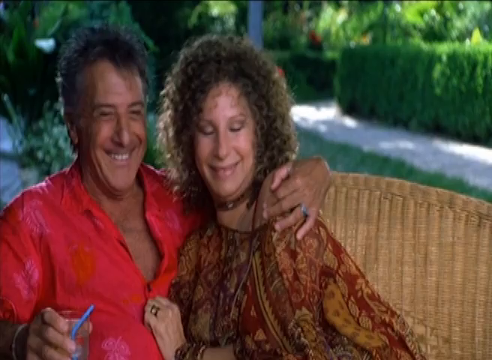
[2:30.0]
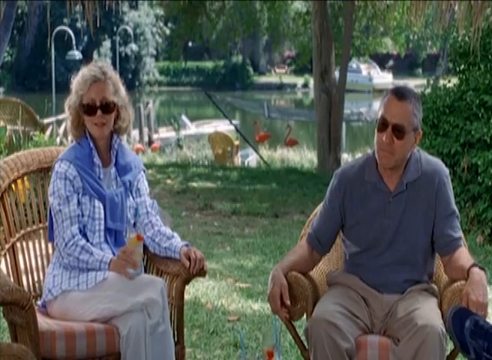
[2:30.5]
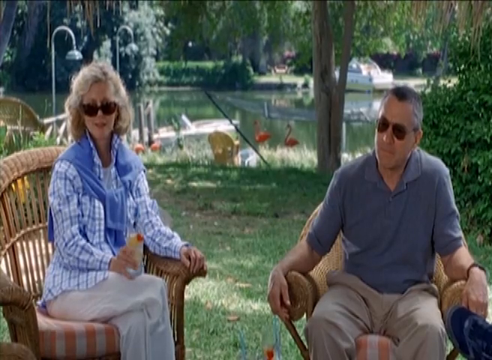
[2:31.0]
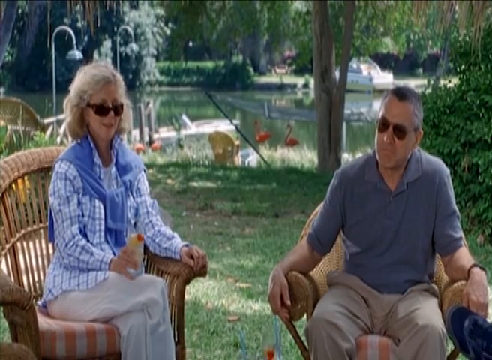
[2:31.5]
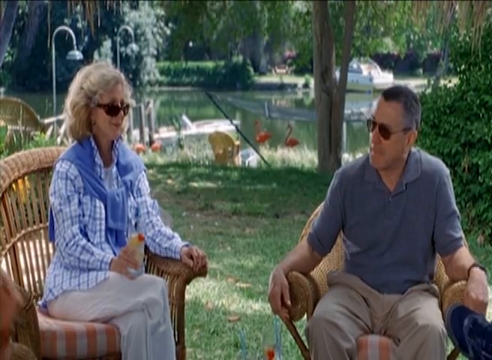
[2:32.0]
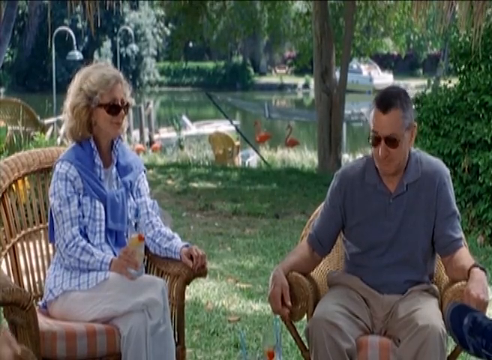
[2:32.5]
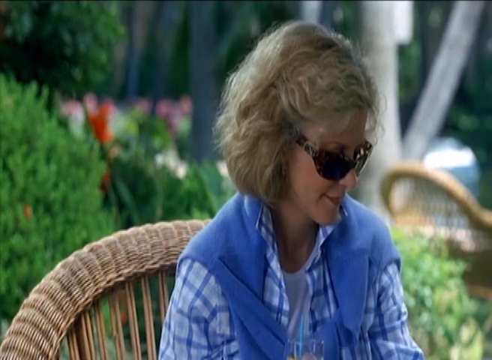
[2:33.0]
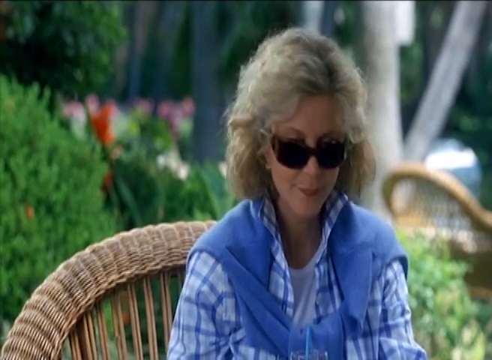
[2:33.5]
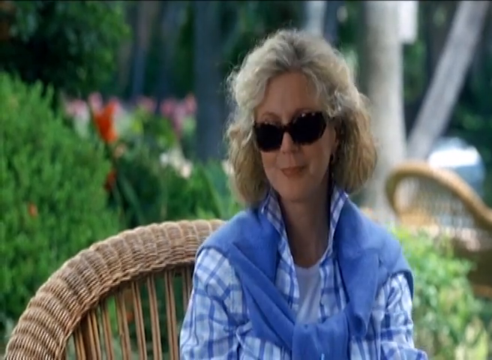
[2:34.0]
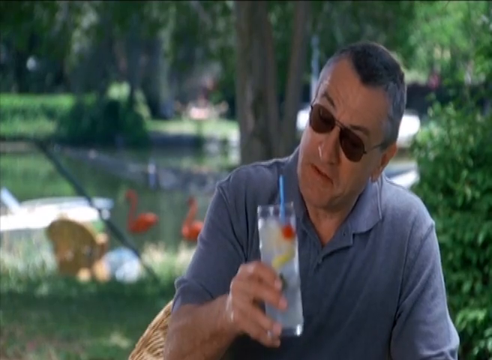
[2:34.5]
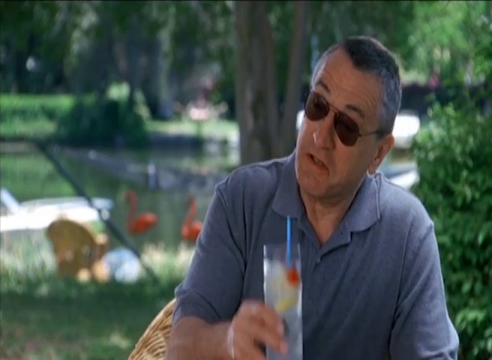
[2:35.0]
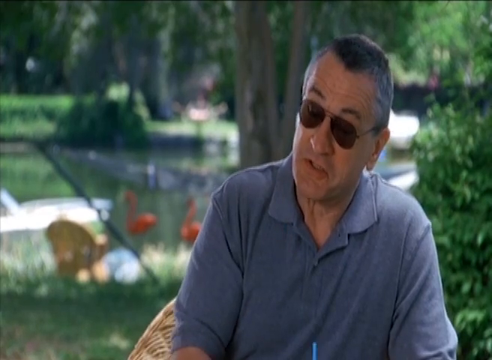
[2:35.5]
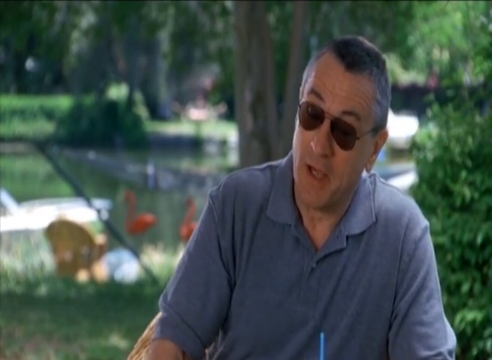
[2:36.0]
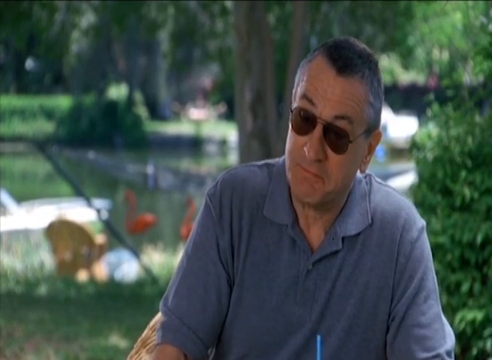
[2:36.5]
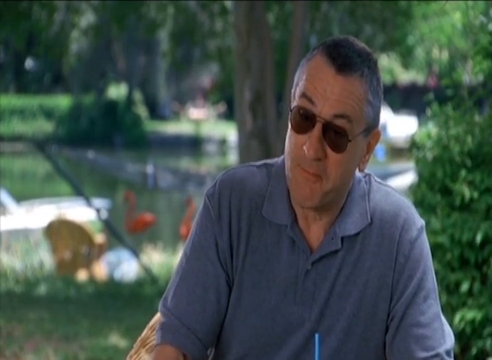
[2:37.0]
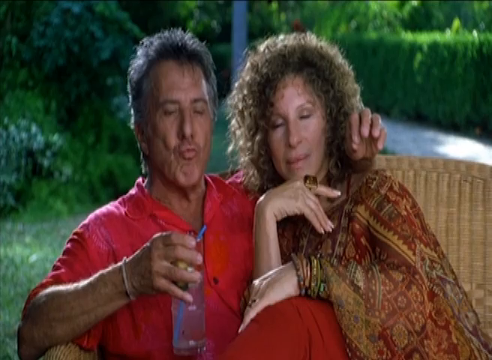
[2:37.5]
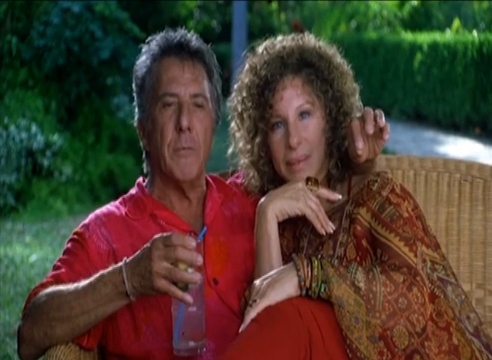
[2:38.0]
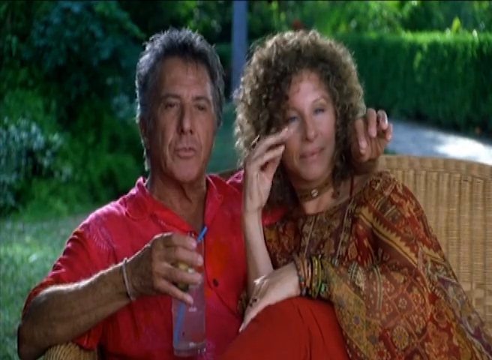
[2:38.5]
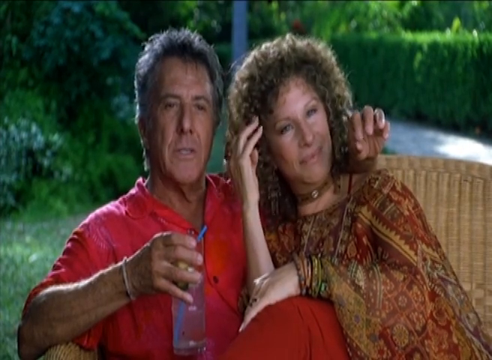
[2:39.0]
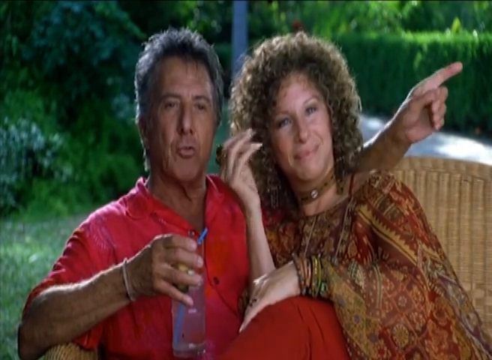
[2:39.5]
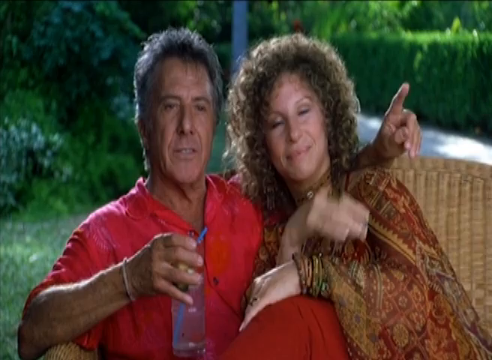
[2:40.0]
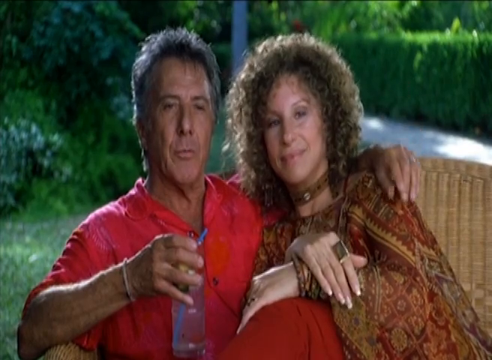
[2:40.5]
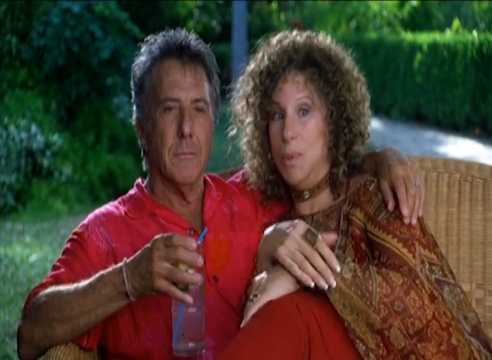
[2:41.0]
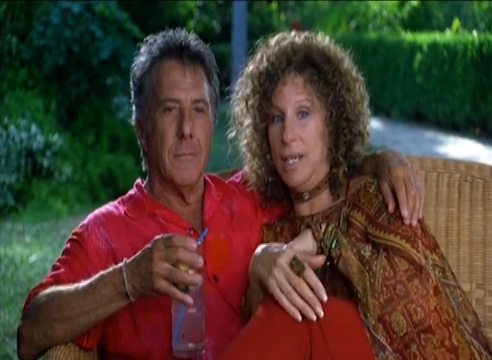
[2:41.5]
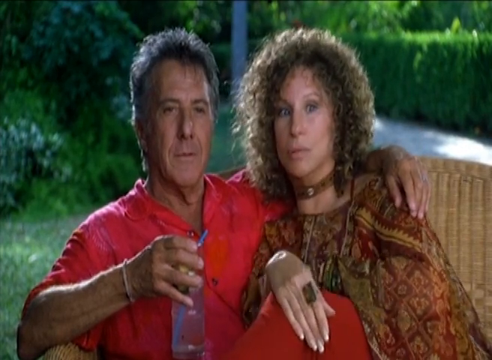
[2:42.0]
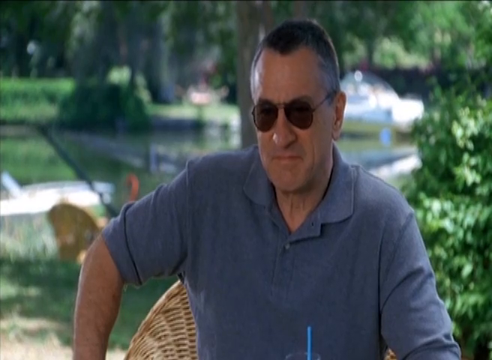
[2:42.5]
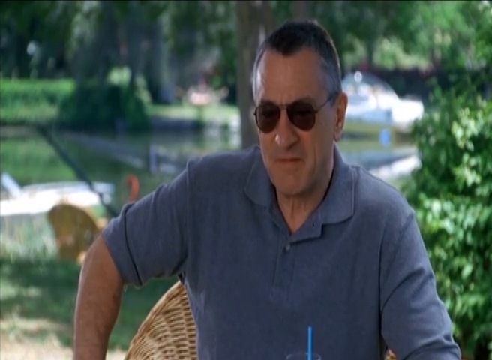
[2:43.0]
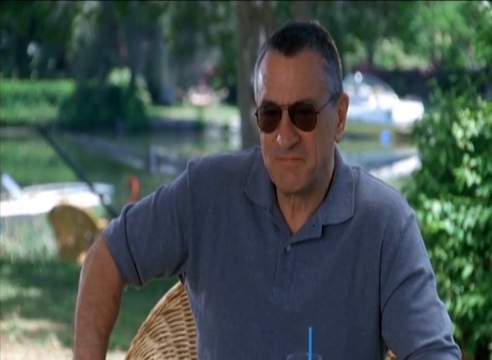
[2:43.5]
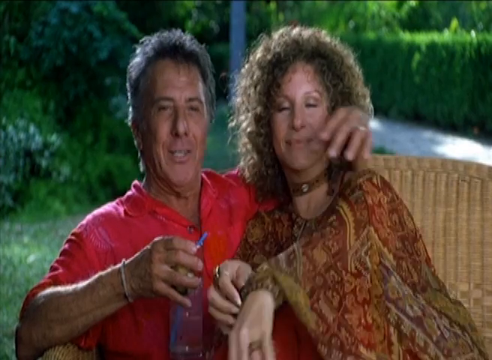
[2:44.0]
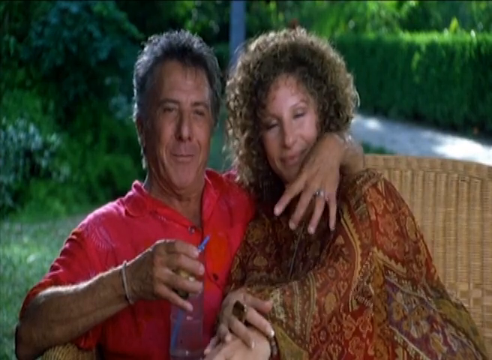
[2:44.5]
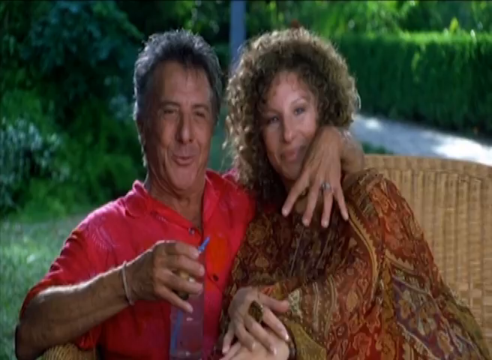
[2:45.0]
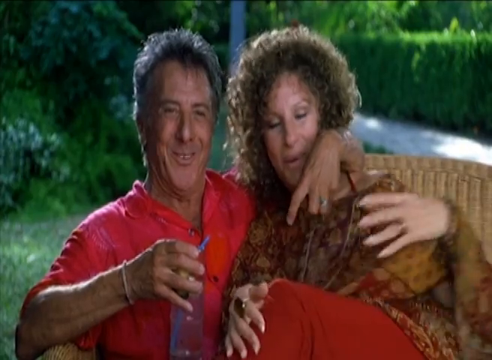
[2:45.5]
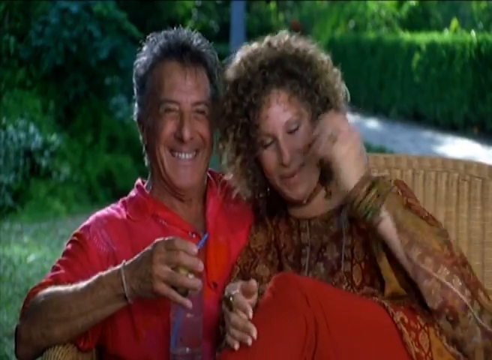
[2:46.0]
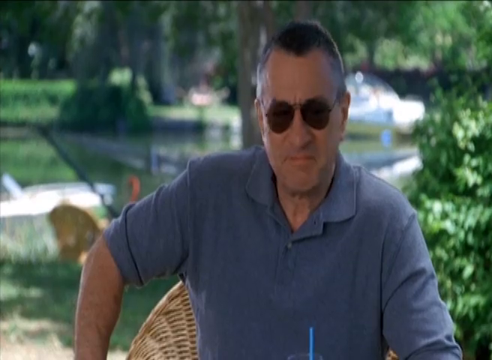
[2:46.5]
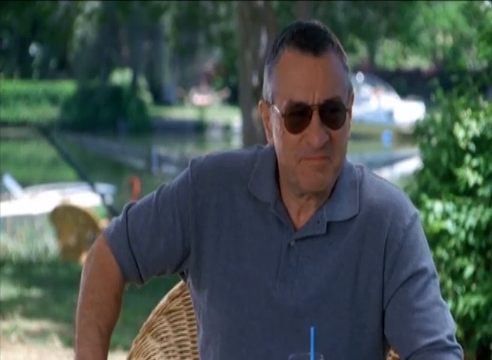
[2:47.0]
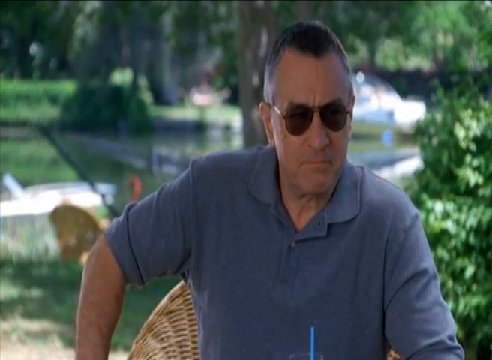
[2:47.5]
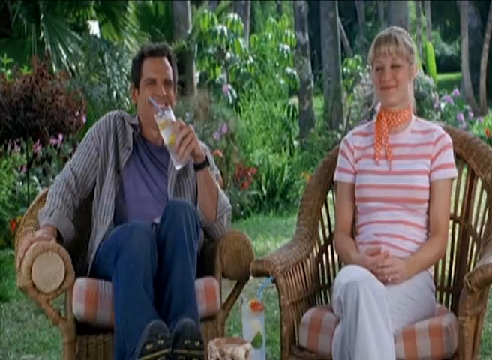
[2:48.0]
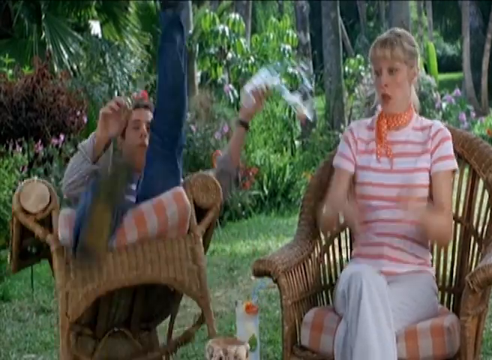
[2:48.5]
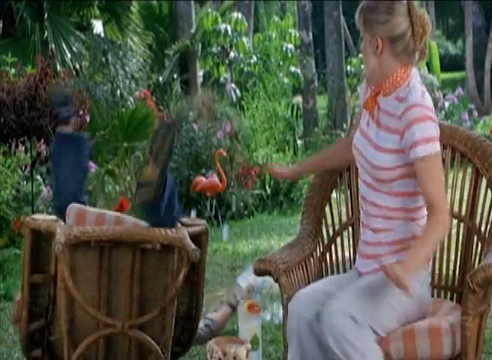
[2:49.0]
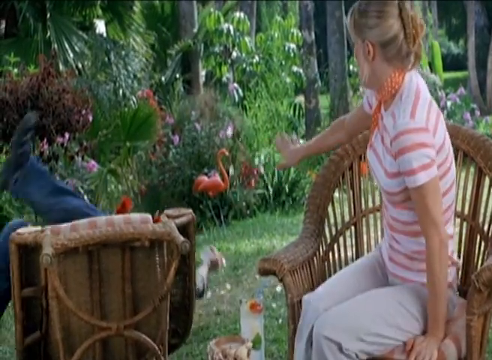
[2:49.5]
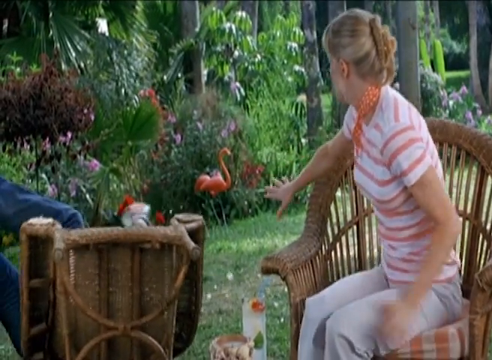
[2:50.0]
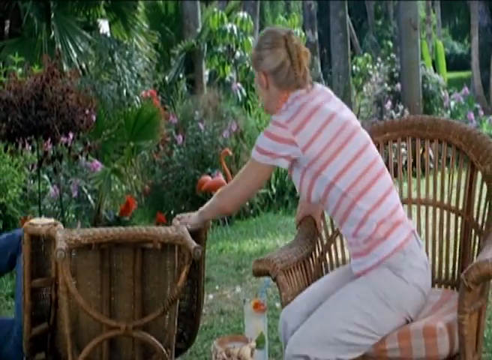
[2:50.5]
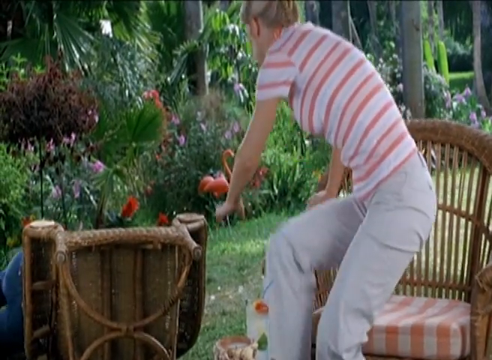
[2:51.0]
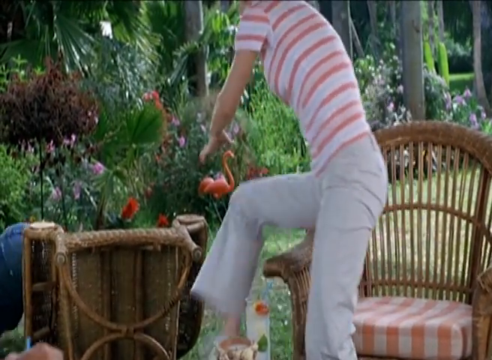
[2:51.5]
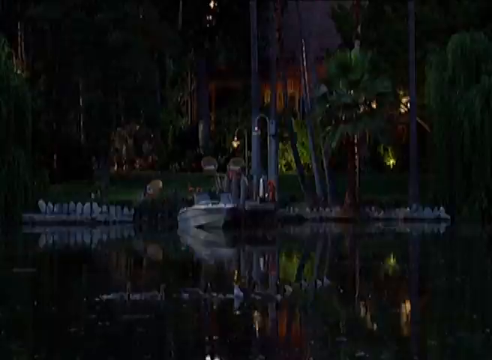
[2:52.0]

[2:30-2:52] The older man in the red shirt has his left hand around the shoulder of the older lady with curls; they smile happily while embracing. The other older couple, the older lady with glasses and the older gentleman with glasses, sit on their own chairs a little distant from each other and kind of look at each other briefly. The older lady with glasses seems to be leaning back in her chair with a serious look, half smiling. The older gentleman with glasses seems to be talking and raising his glass, with a pensive look. The snuggled couple appear: the man in red seems to be talking while gesticulating with one hand and holding his drink with the other, and the older lady with curls beside him seems very happy, playing with her curls with her right hand and snuggling close to him, presumably her husband; she then starts talking too. The older gentleman with dark glasses sits looking smug. Back with the couple, the older lady playfully tries to remove the man's hand from her shoulder while both smile happily and talk. The older gentleman with glasses still has a pensive look. Then the young couple: the young man holds his glass in his left hand when his chair falls backward, and he falls with it, spilling his drink. The young woman looks very surprised, raises her hand as if to stop it, and turns toward him, then starts to stand and go toward him.